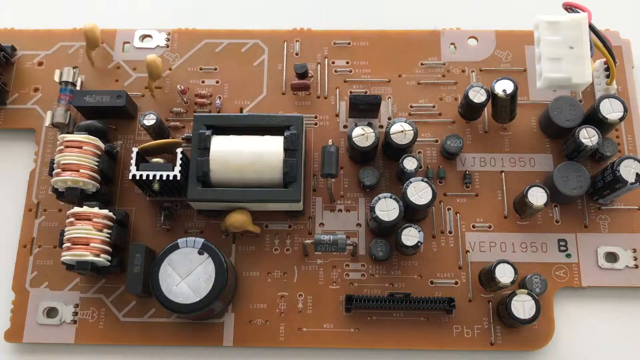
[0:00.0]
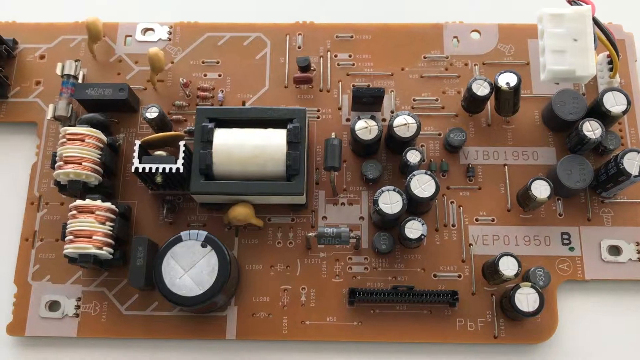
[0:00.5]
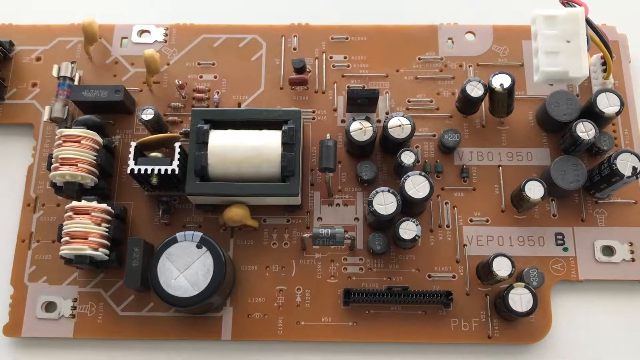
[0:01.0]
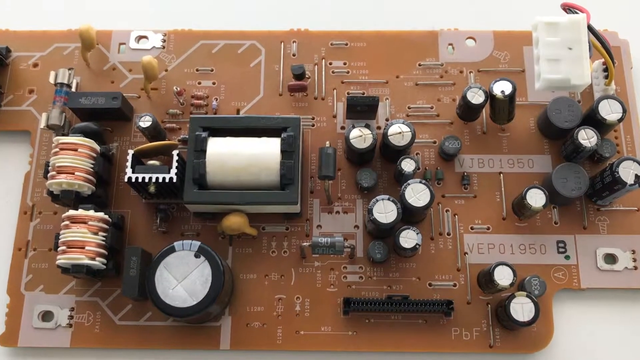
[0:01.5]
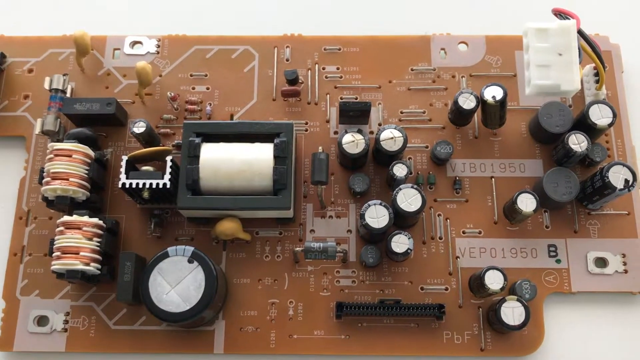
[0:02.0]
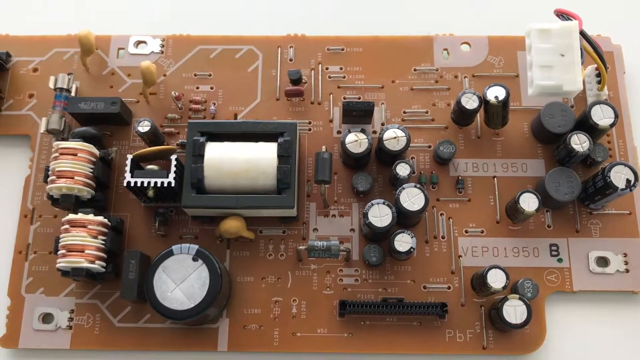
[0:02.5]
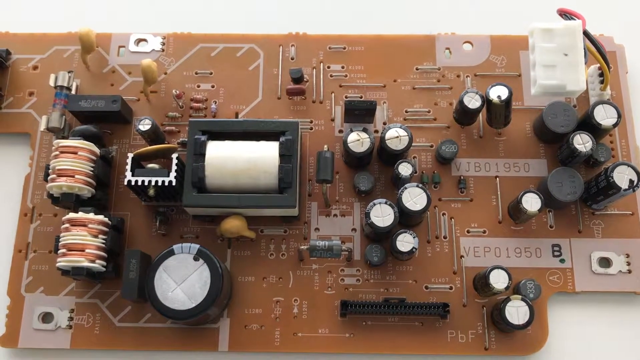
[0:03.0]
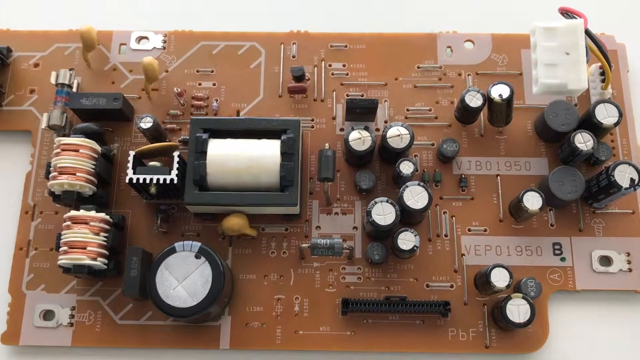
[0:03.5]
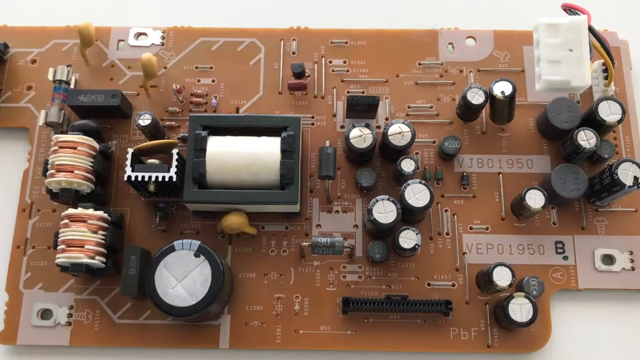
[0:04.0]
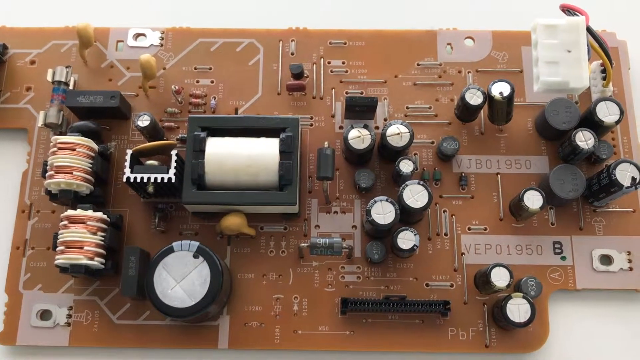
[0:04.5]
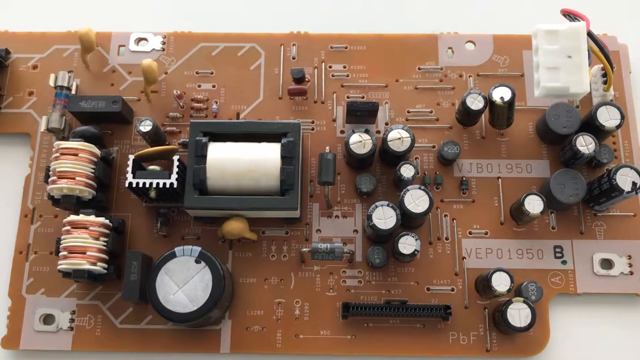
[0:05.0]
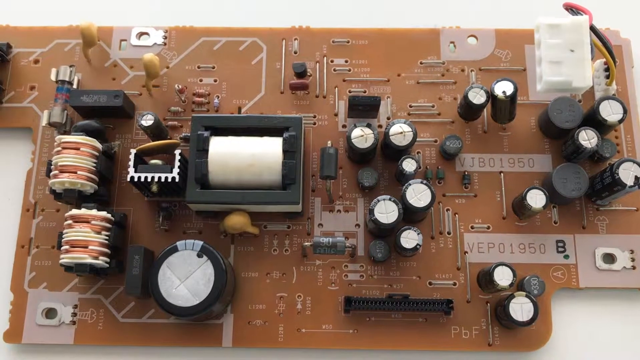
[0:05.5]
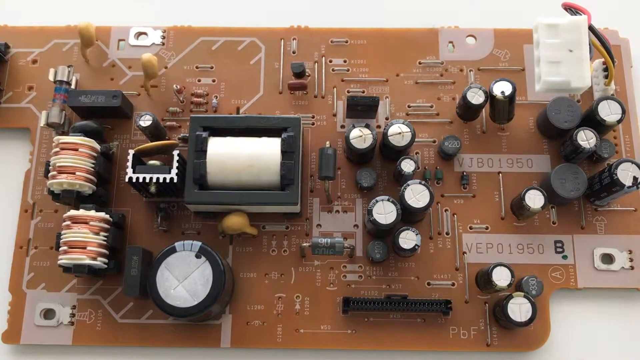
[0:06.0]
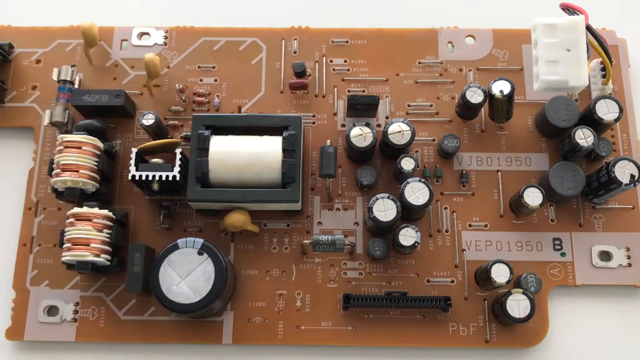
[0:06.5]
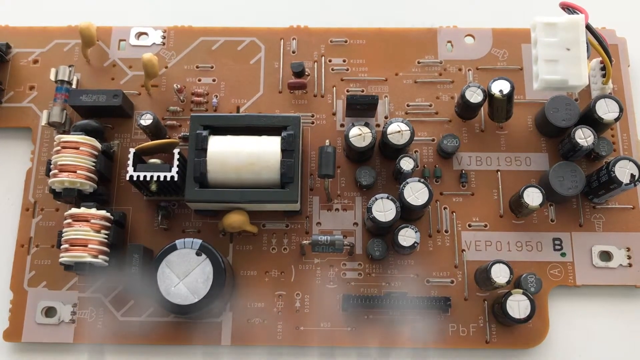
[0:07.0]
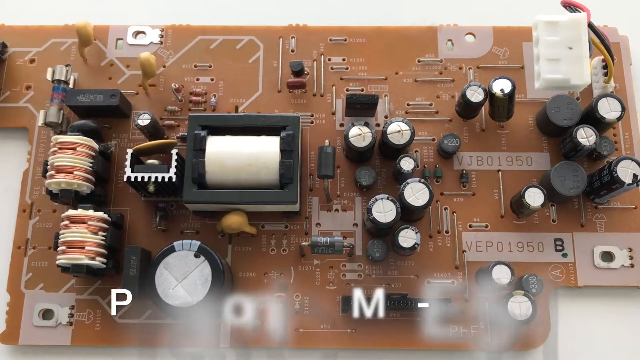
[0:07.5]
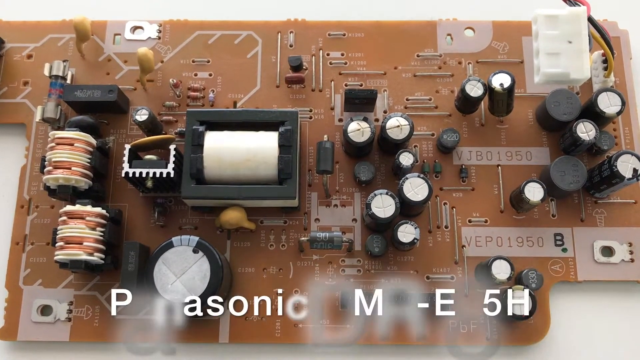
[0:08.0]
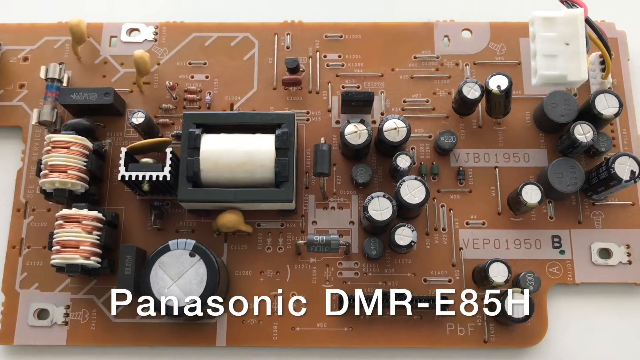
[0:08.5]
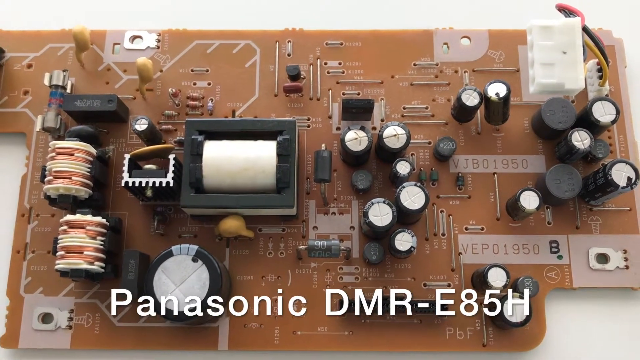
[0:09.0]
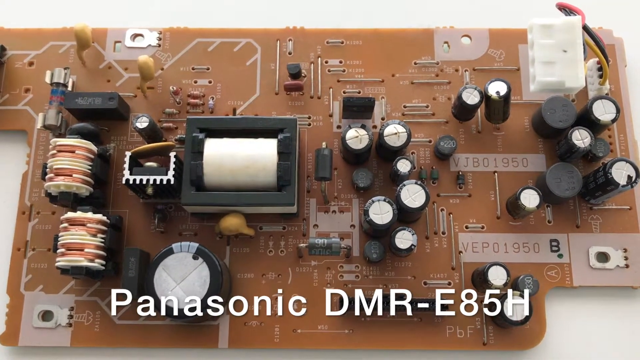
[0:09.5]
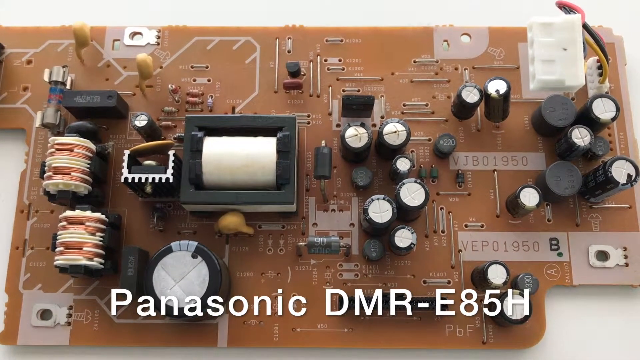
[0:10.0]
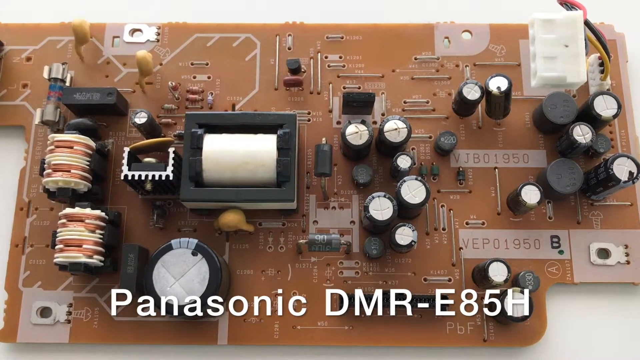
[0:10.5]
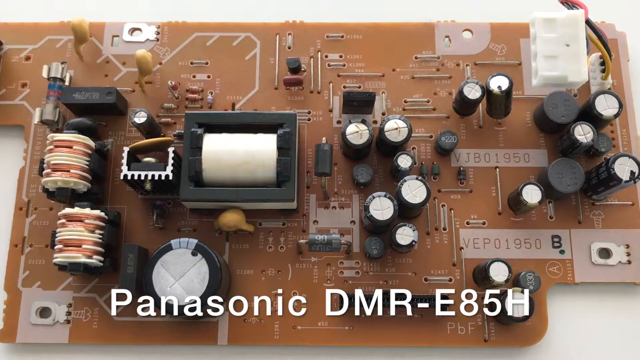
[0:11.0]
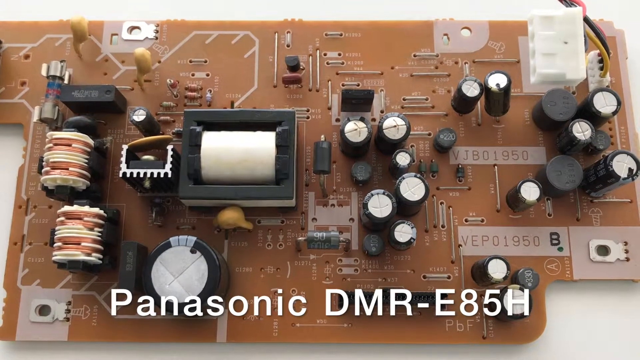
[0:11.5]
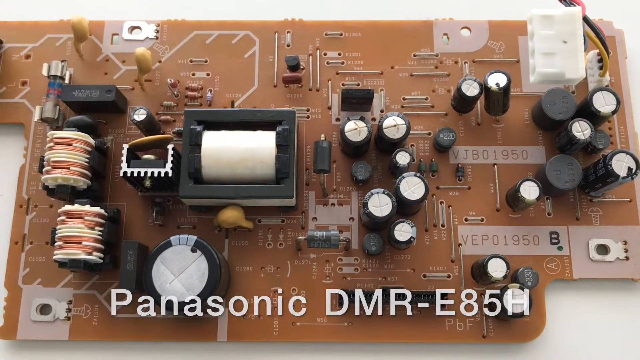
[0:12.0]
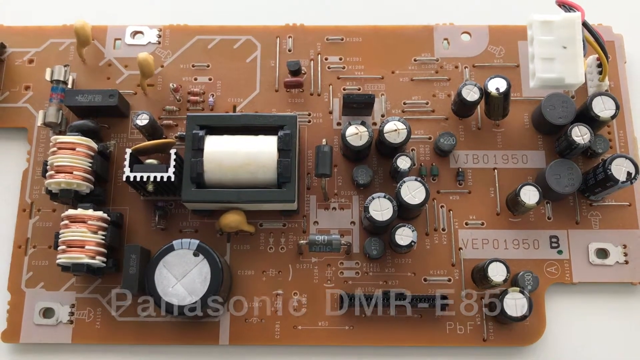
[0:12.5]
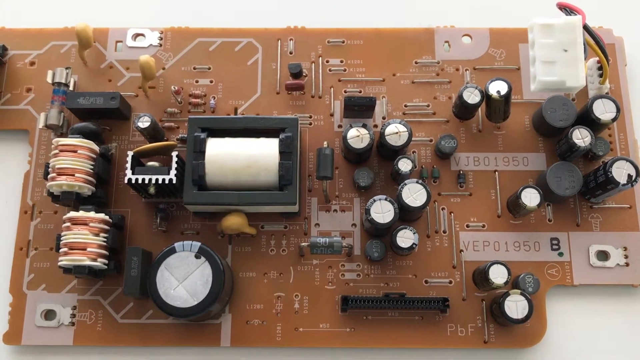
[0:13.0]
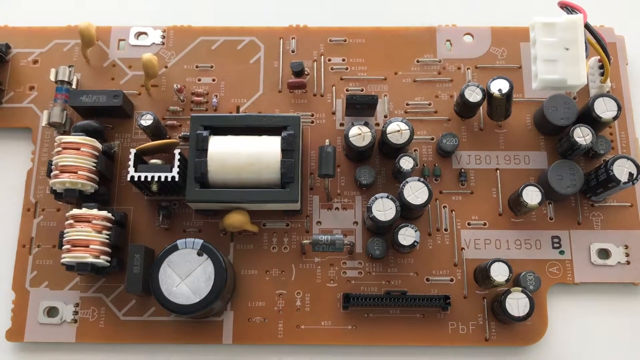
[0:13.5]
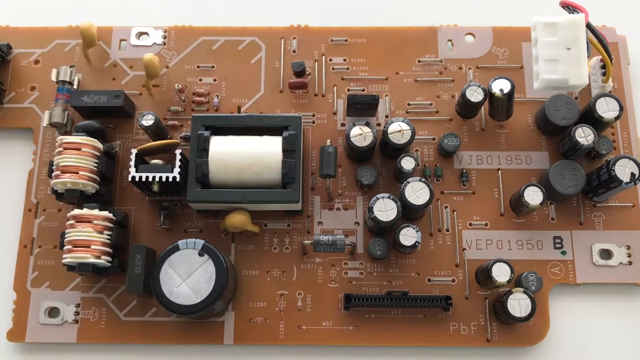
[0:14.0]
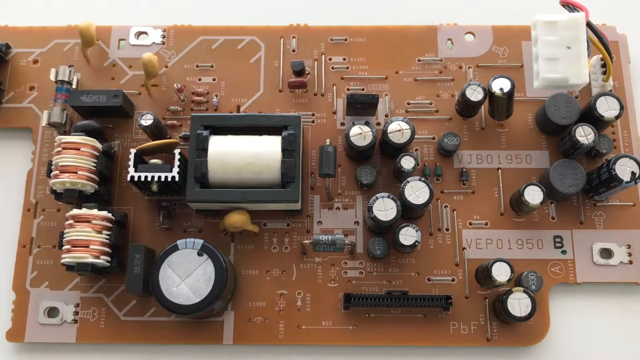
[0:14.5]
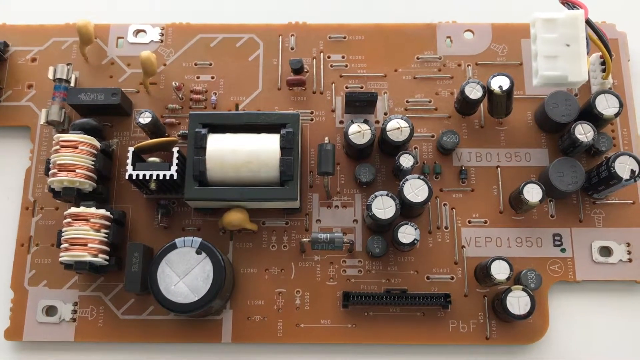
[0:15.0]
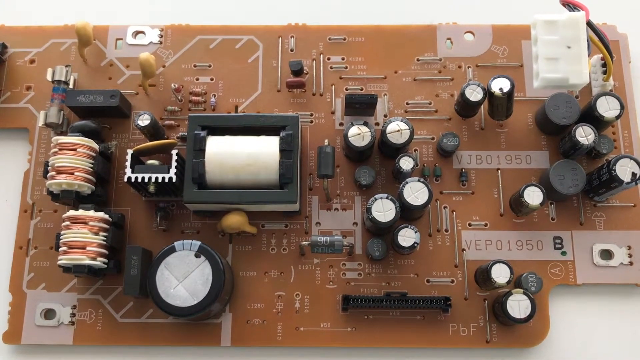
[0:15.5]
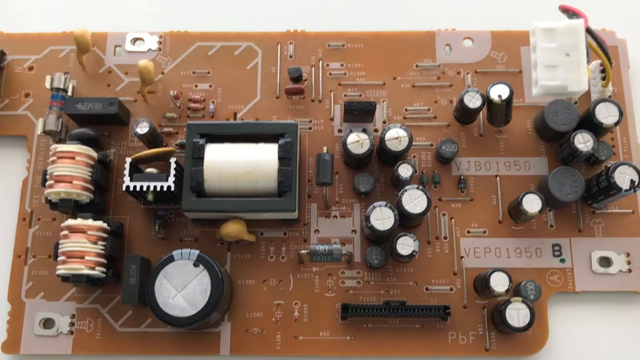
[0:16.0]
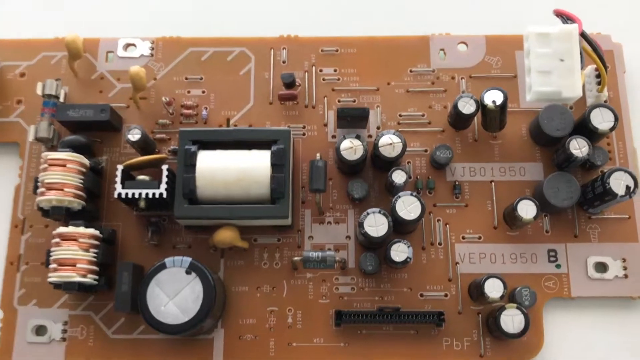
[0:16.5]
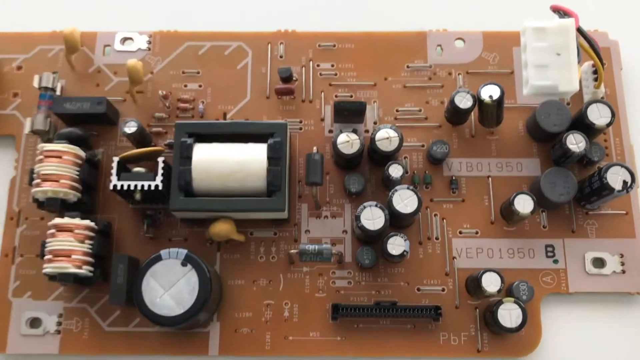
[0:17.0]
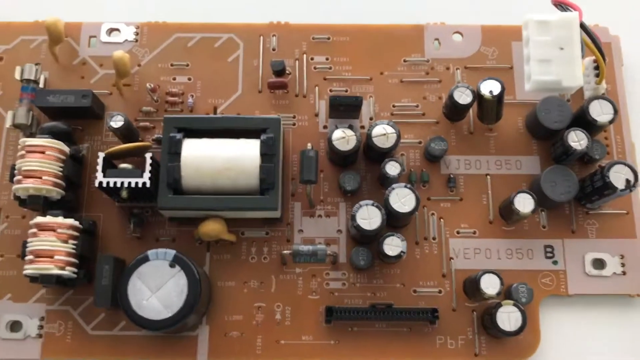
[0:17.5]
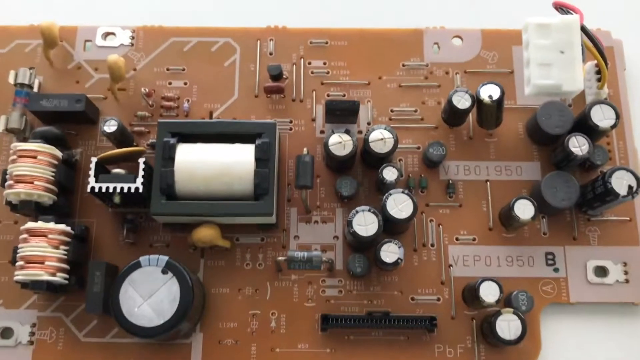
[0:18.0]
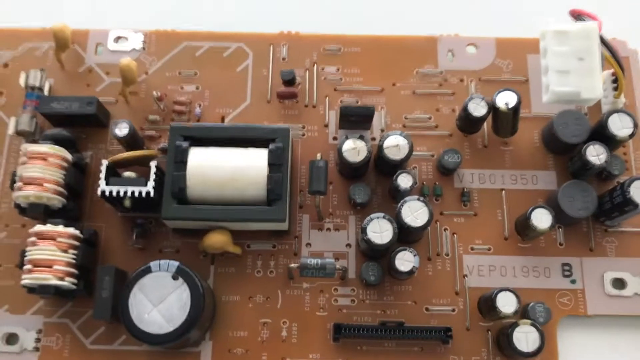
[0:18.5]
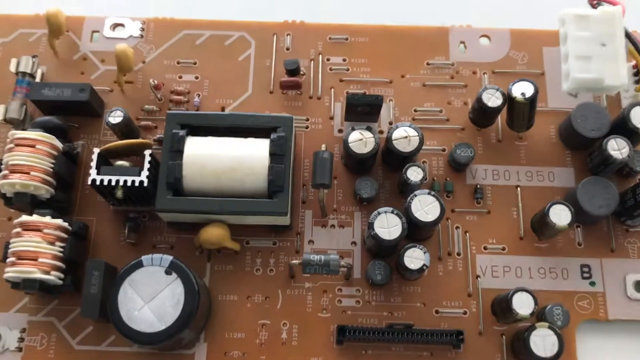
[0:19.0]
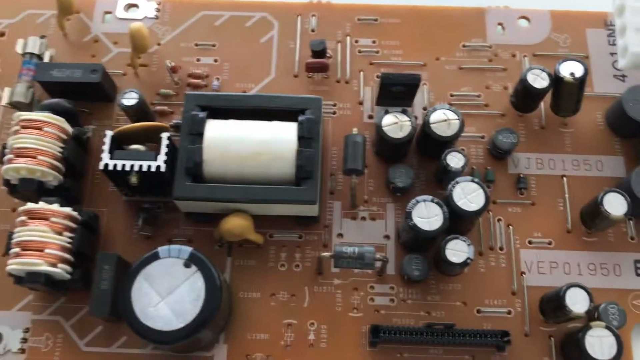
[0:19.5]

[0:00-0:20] An electric circuit board fills the view, a generic circuit of the kind normally used for practice in schools; the specific device is not identified. The person recording keeps the camera focused on the circuit. White text at the bottom of the video reads "Panasonic DMR-E85H", possibly referring to the circuit being shown. The board has resistors, transistors, different connectors and copper wires, and the plastic it is mounted on is a brown-orange color. It carries several legends, with printed codes in some parts of the circuit, as well as small drawings and small white lines drawn on top of the circuit and around some of the elements. Some elements are circular and others are small squares; most are white with black, and one looks like it has copper wires.